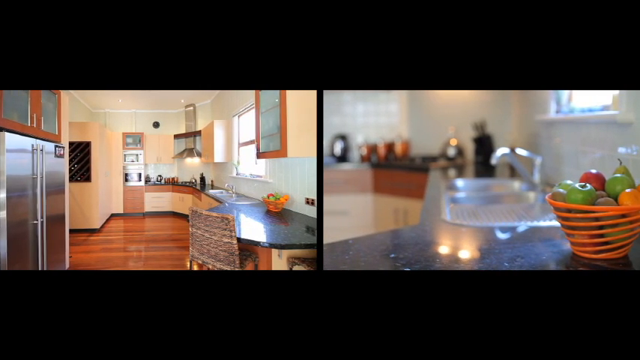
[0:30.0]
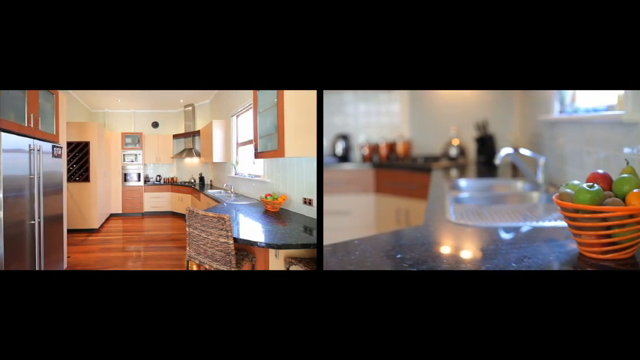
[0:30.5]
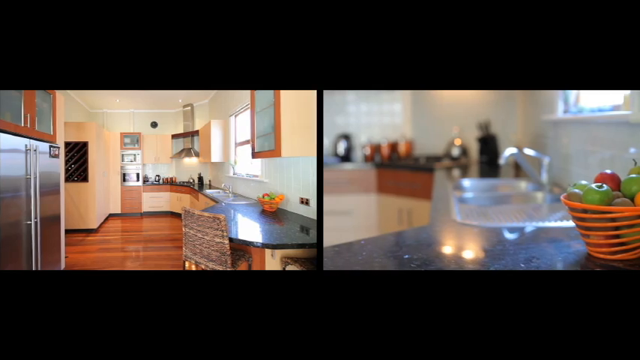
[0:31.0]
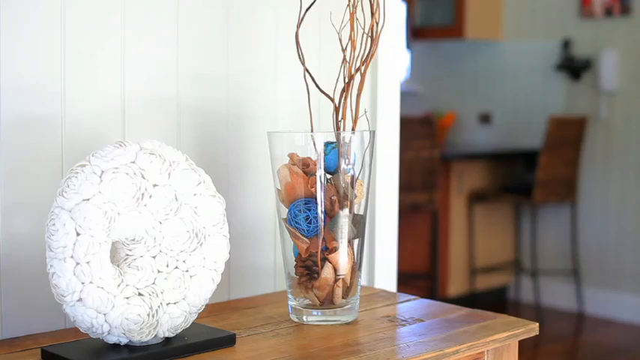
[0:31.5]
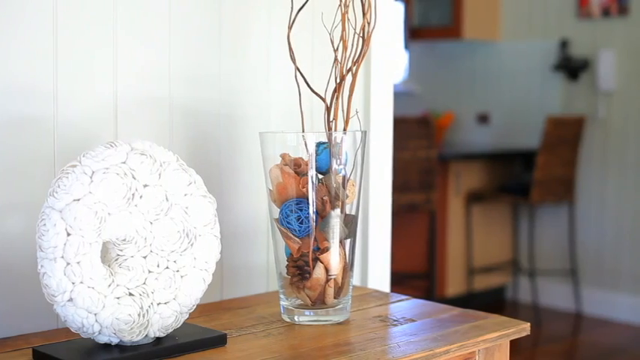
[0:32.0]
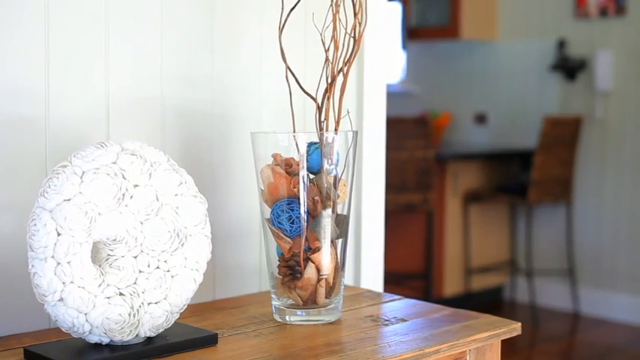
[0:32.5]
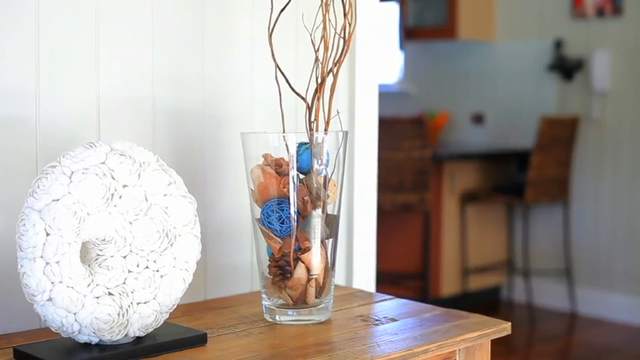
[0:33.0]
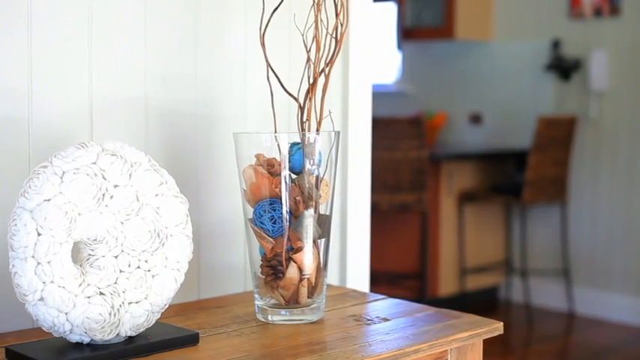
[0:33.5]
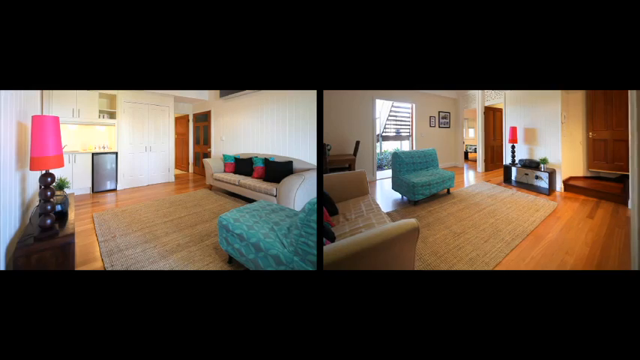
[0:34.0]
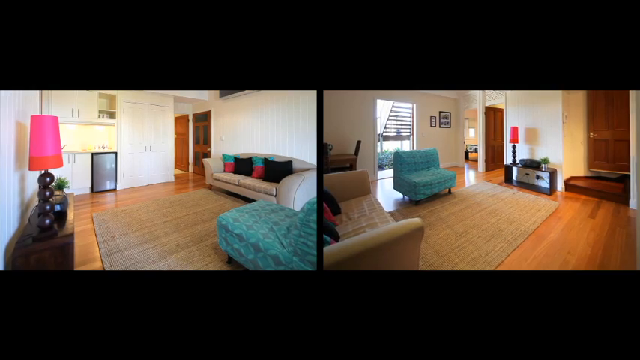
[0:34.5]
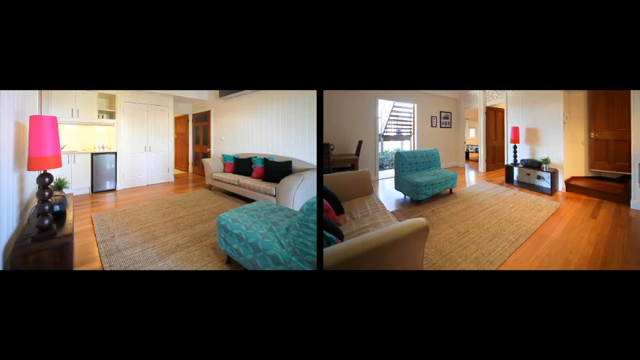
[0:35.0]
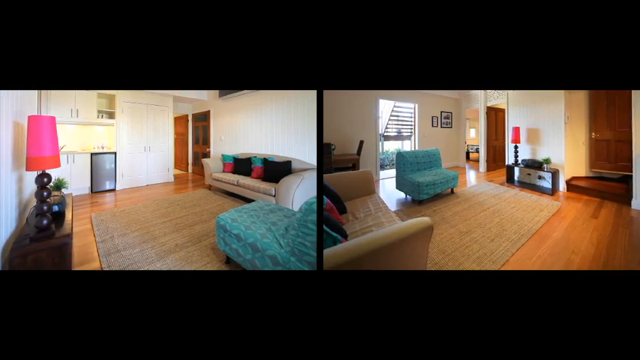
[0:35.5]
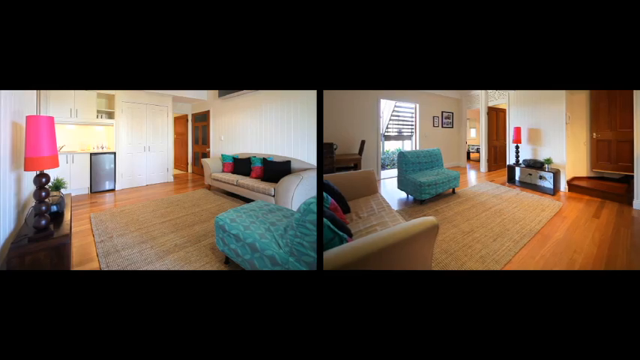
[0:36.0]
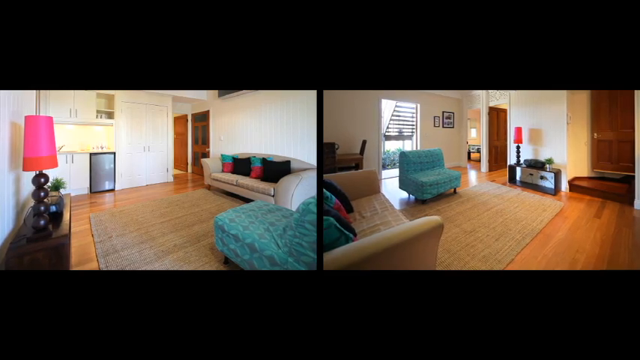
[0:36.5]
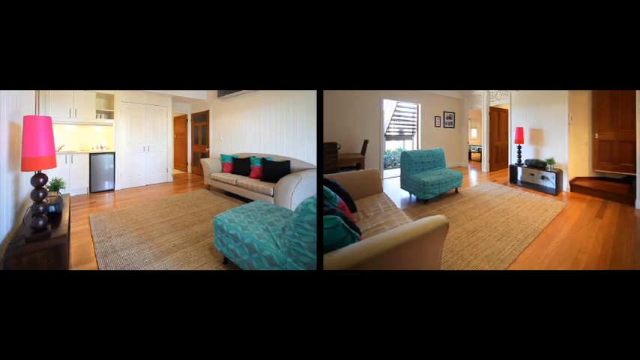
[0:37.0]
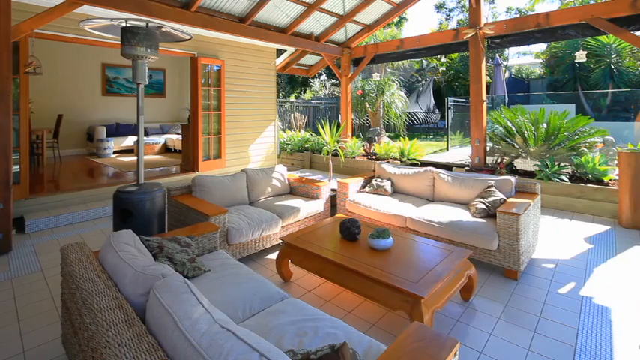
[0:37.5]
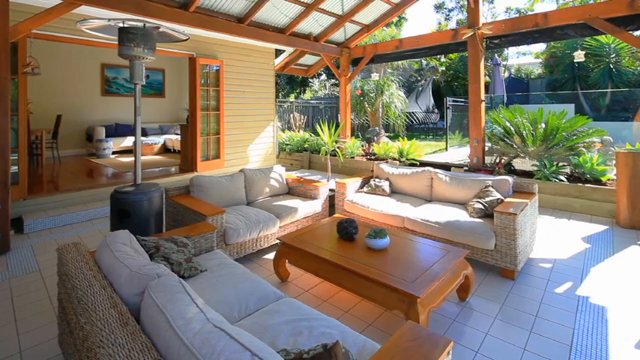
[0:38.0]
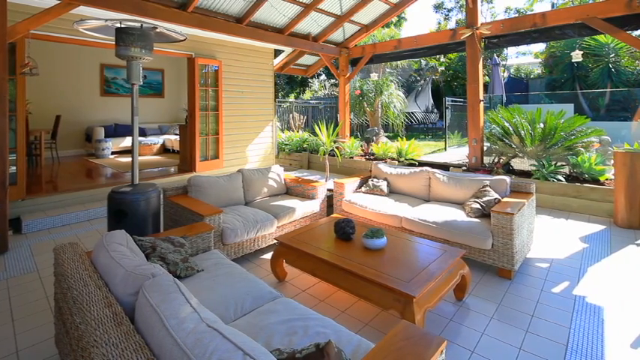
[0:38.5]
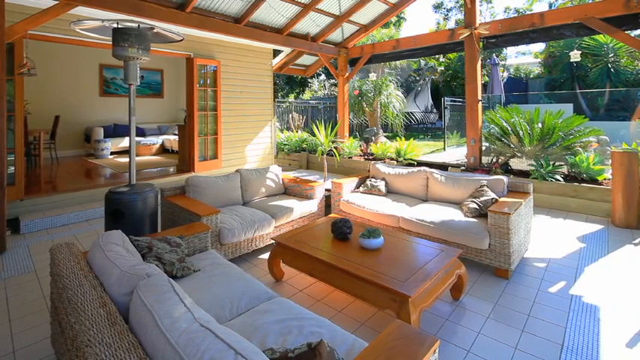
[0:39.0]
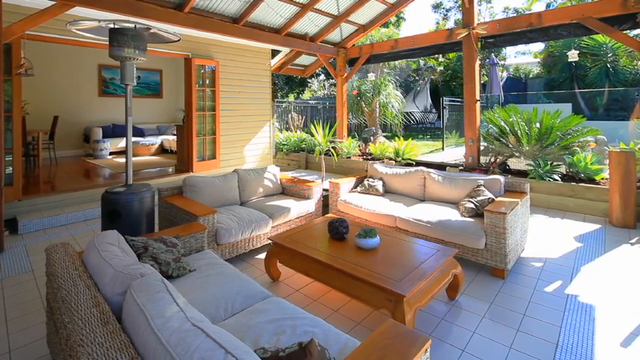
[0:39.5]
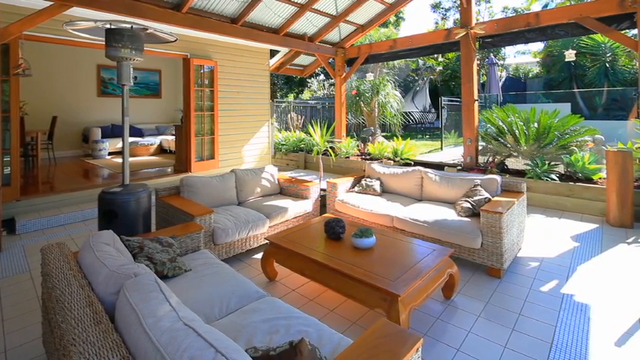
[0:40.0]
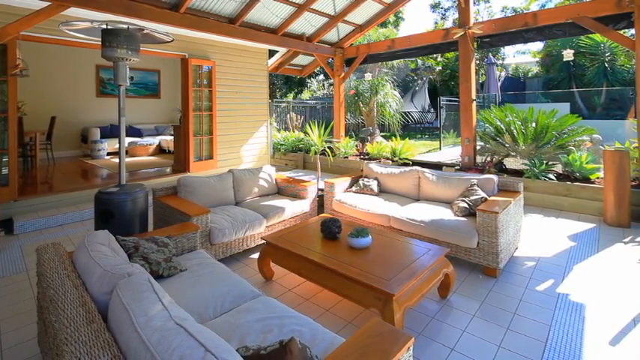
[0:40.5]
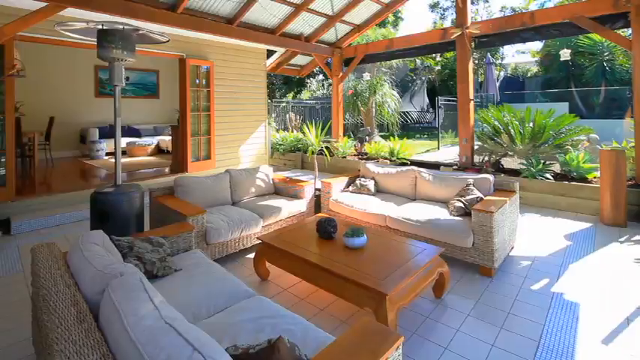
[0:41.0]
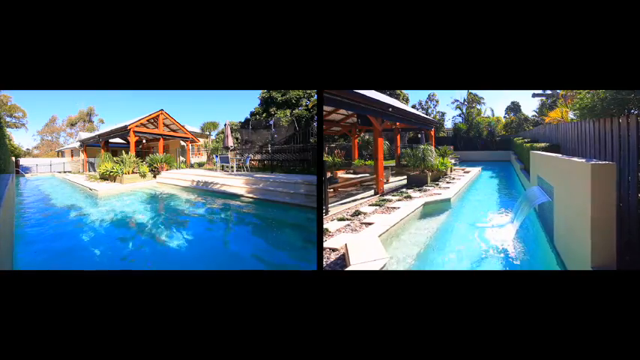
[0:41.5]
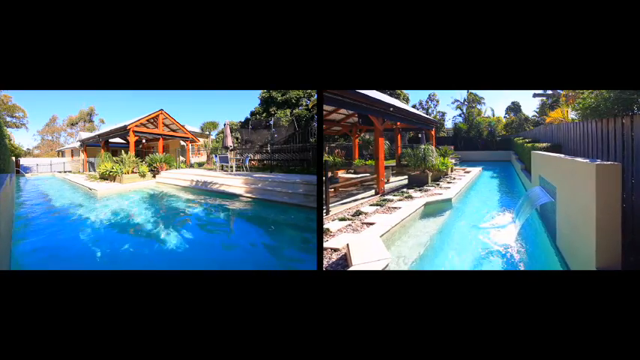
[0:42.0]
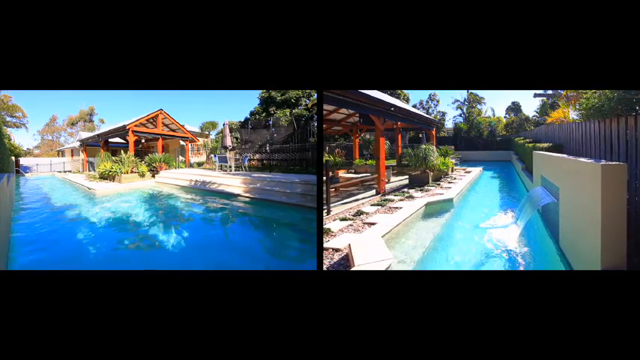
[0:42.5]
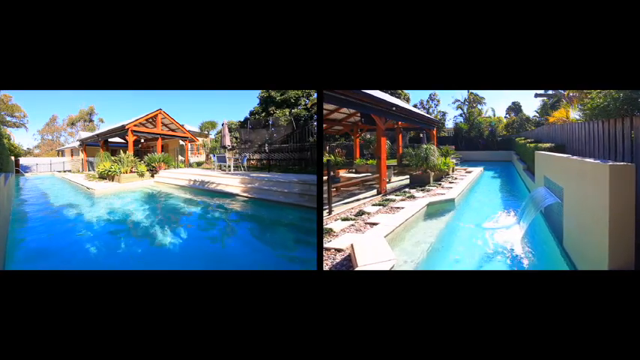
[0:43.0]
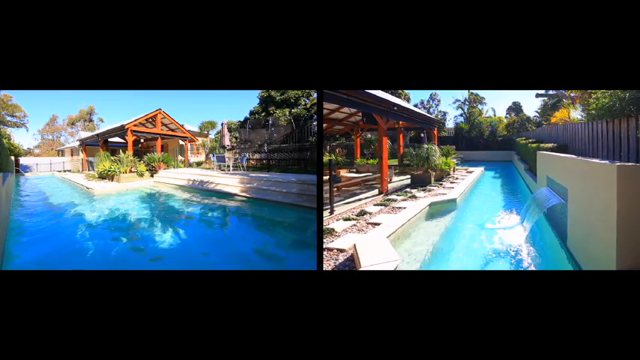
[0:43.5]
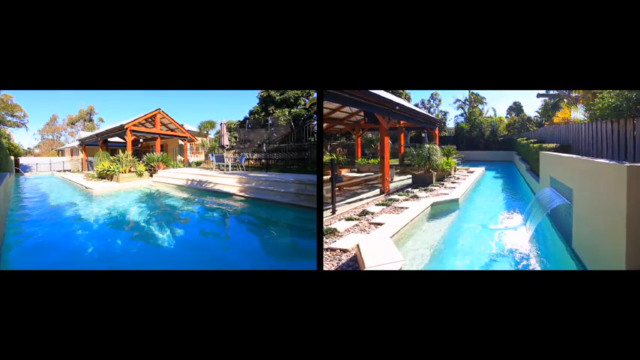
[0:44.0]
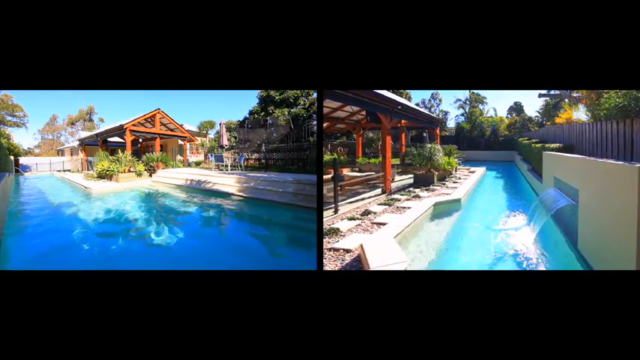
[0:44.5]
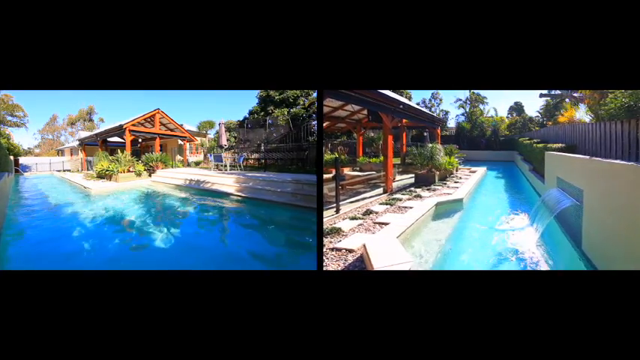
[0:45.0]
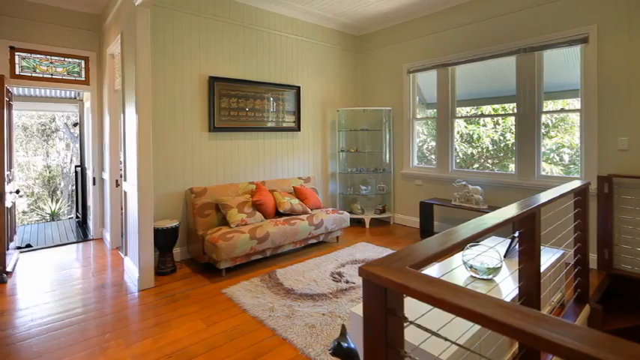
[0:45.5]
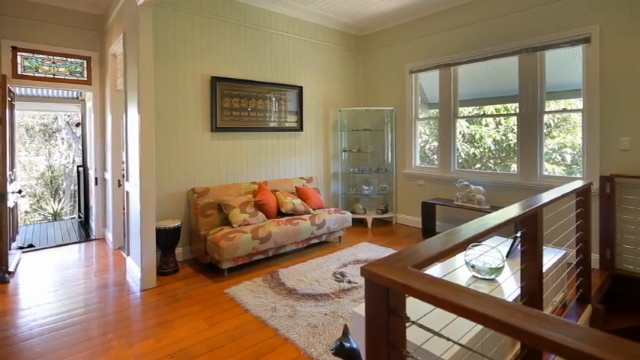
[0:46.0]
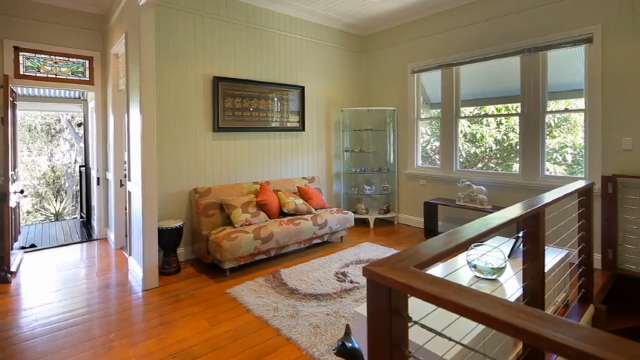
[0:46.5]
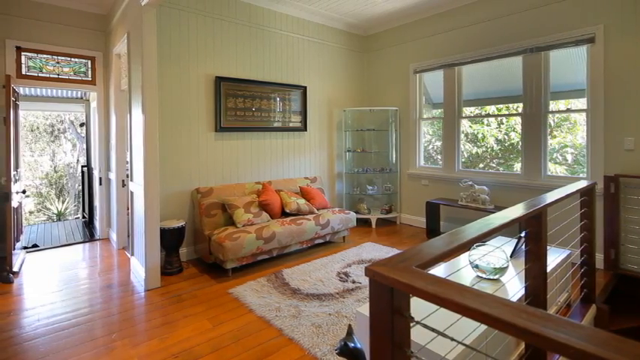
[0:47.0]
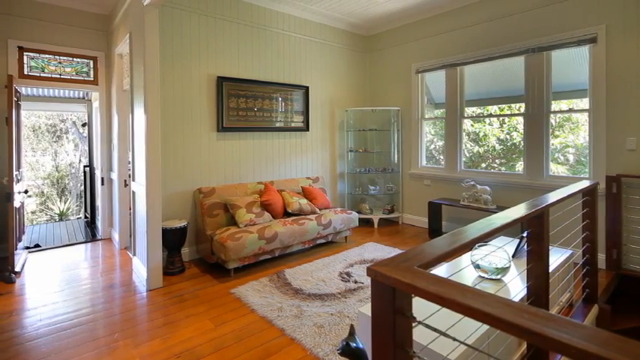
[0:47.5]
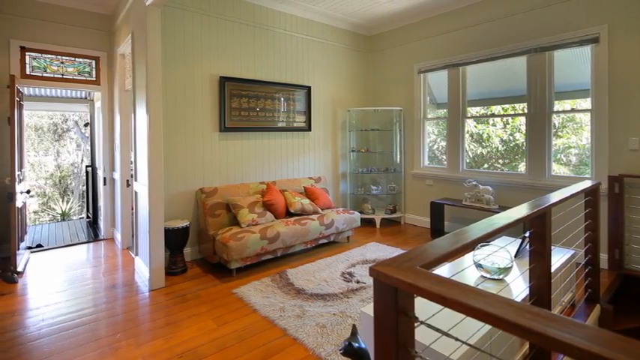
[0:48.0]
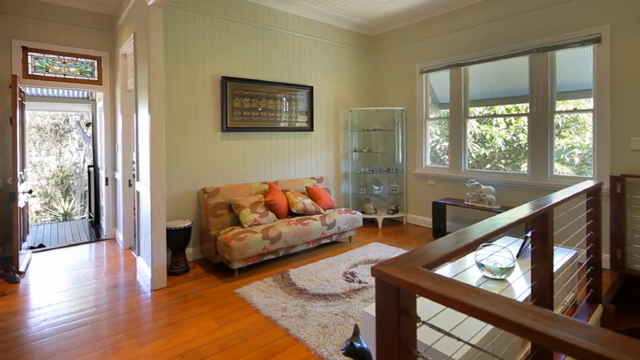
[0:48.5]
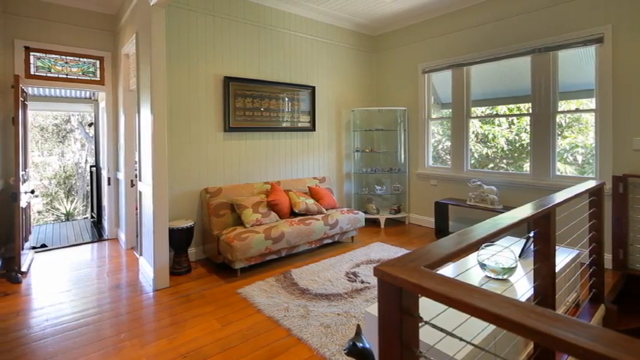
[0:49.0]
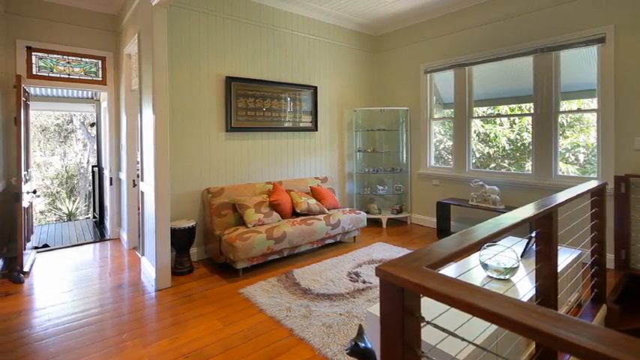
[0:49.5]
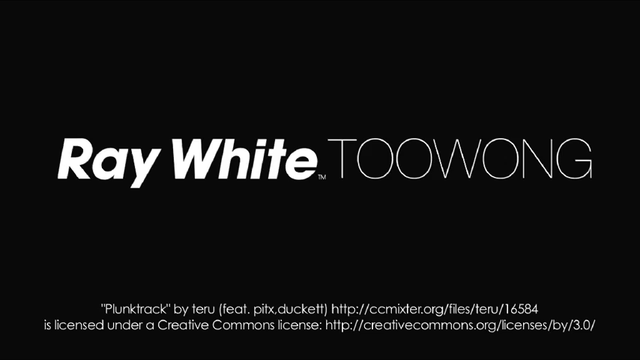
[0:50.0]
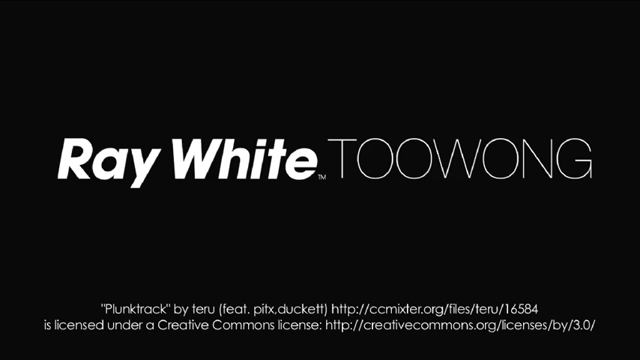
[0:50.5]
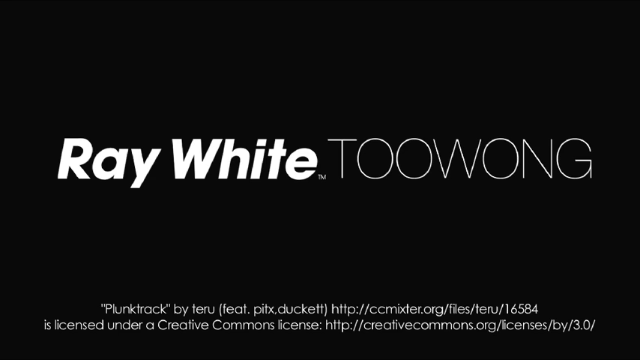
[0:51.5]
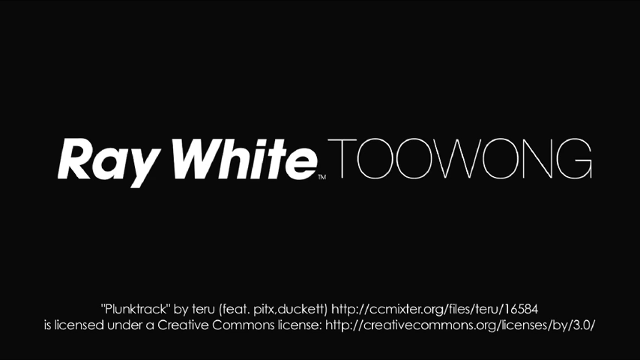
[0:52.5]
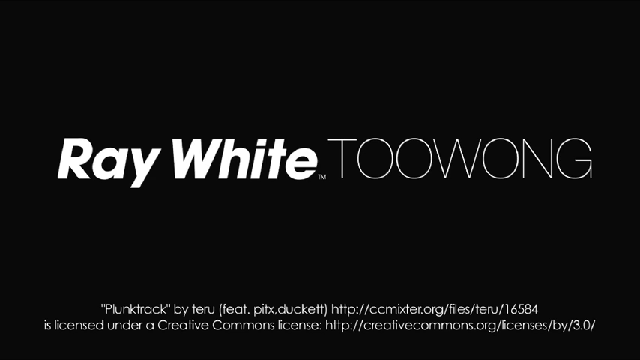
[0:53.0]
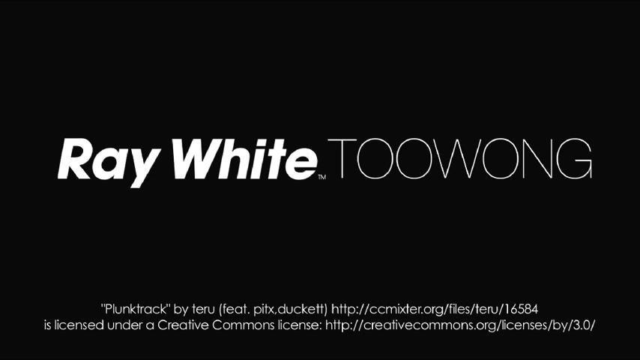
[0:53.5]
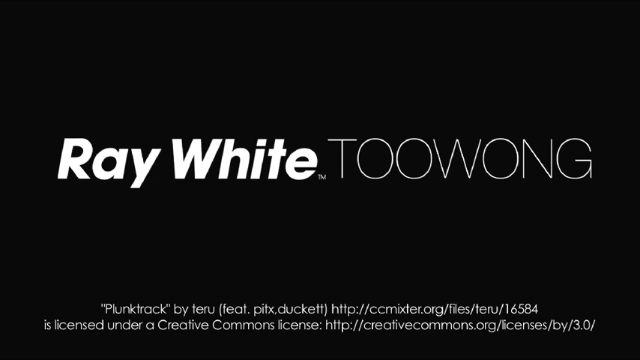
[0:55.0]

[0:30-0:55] The home's exterior with the garage and the trees is shown again. The living room appears again with the fishbowl and a picture on the wall. The outside area follows with the patio furniture, the yard and the trees, then the bedrooms from a slightly different angle, and the bathroom, in what appears to be a recap. The kitchen is shown with the fruit bowl and semicircle countertops. Another structure appears, then the living room with another room containing some beige and aqua furniture, along with a better look at the outdoors. A large, long pool is shown, its water very clear and very blue; one side of it seems a bit still while the other side seems more active. The pace then speeds up somewhat. The living room area is shown once more, and then realtor information pops up: the name Ray White, with a couple of URLs under the name.